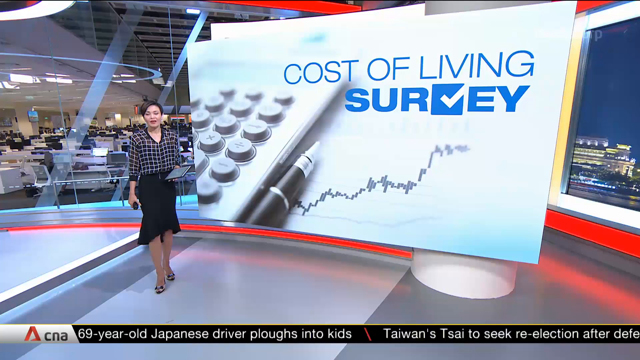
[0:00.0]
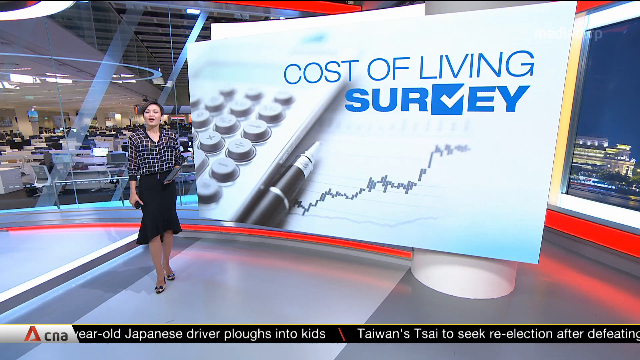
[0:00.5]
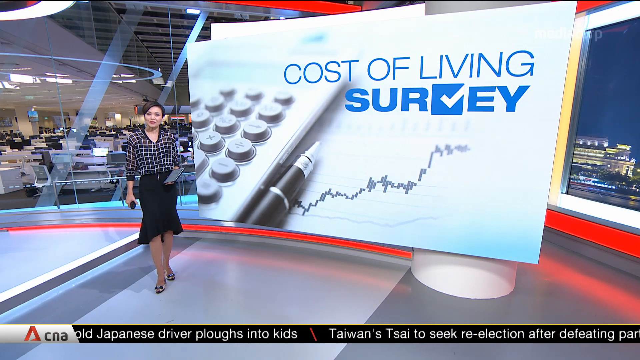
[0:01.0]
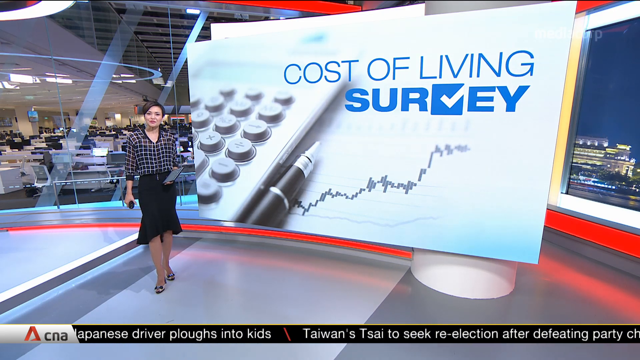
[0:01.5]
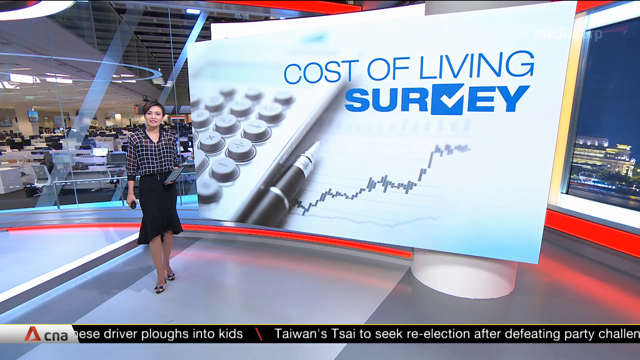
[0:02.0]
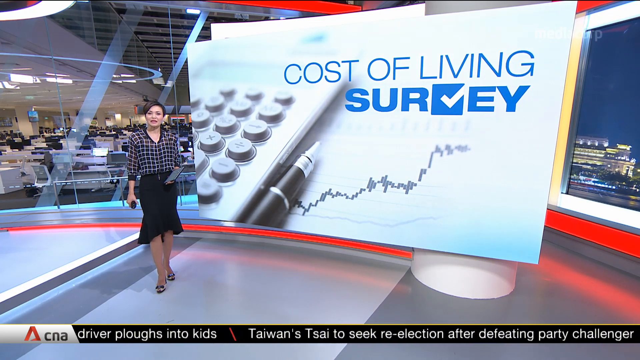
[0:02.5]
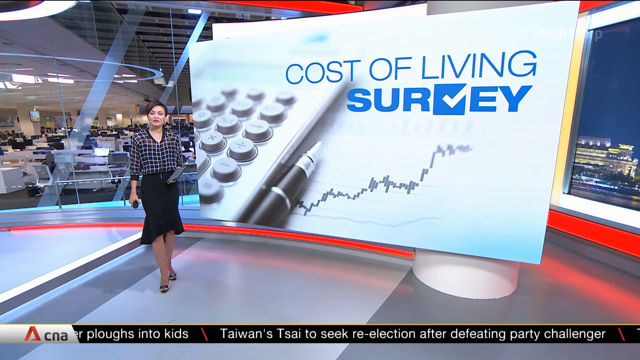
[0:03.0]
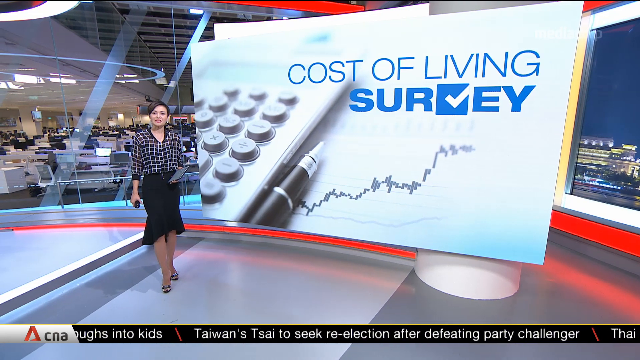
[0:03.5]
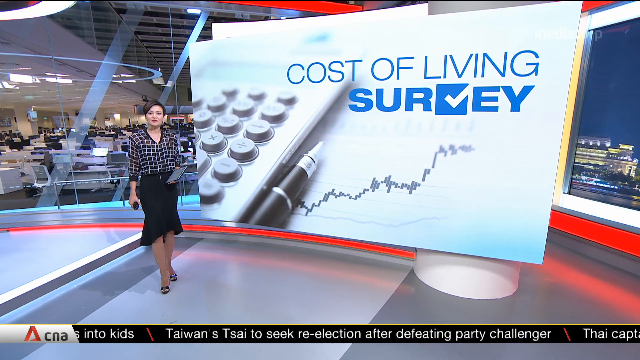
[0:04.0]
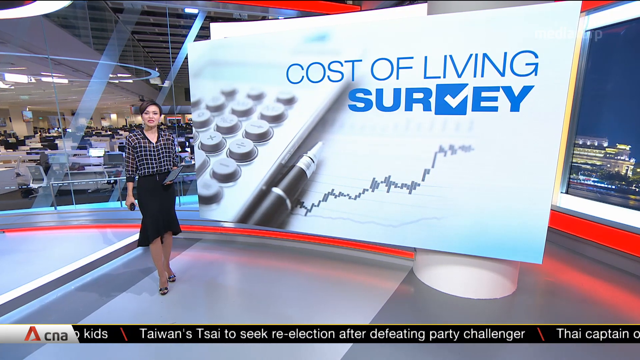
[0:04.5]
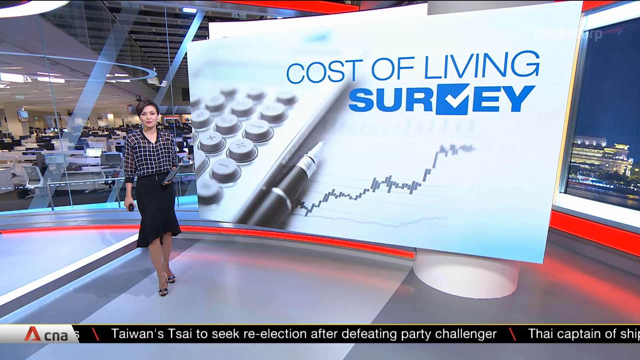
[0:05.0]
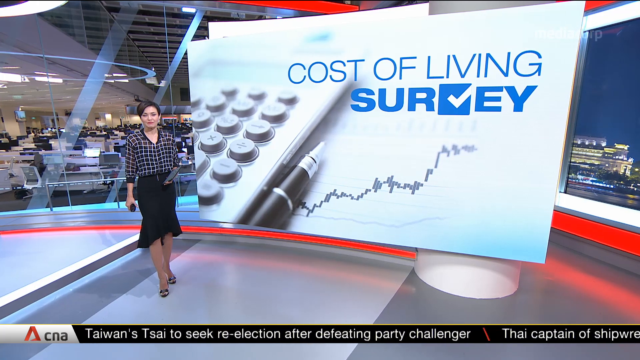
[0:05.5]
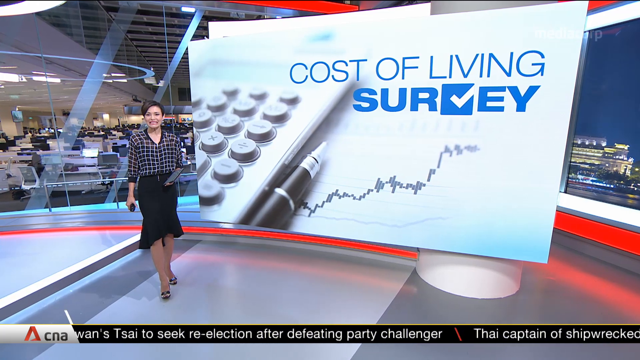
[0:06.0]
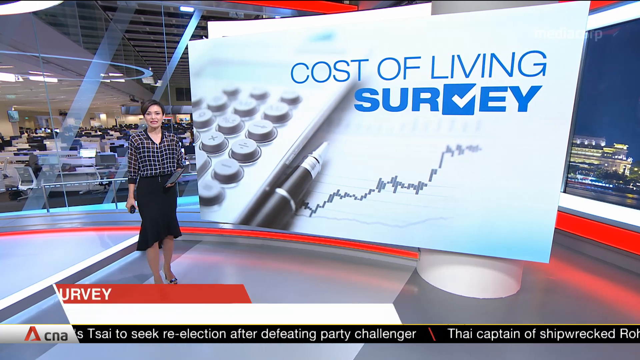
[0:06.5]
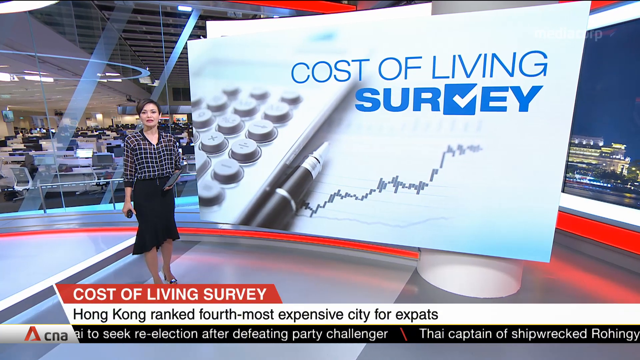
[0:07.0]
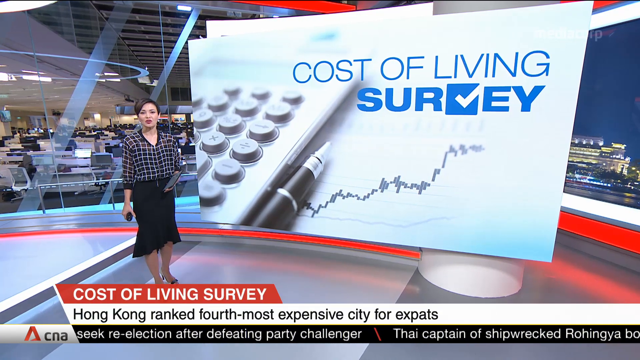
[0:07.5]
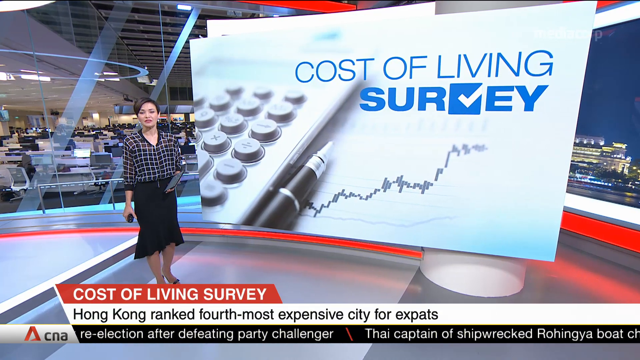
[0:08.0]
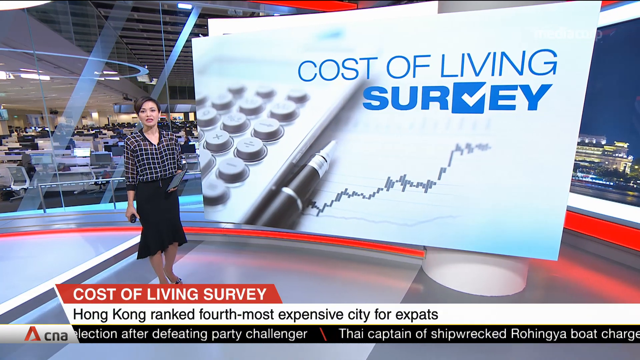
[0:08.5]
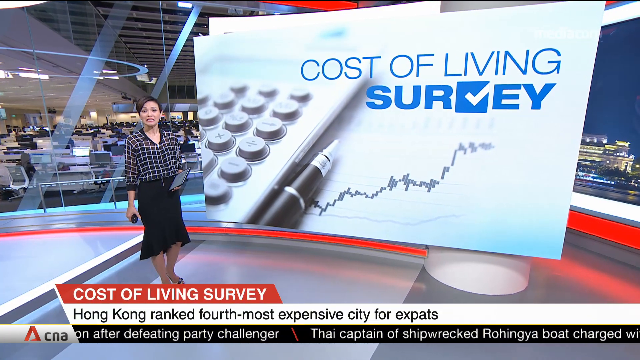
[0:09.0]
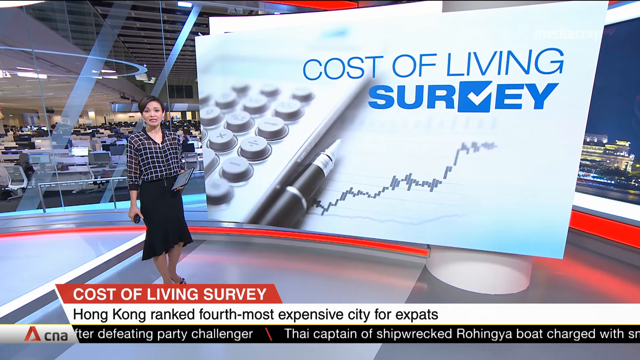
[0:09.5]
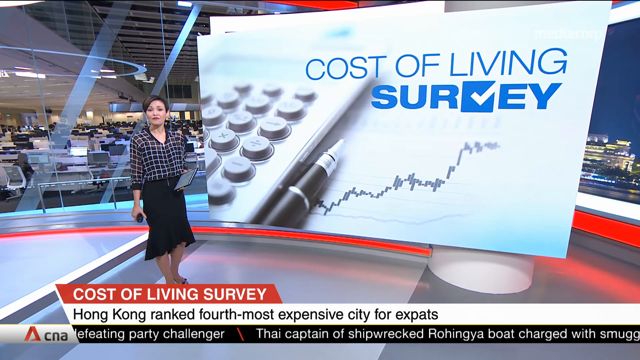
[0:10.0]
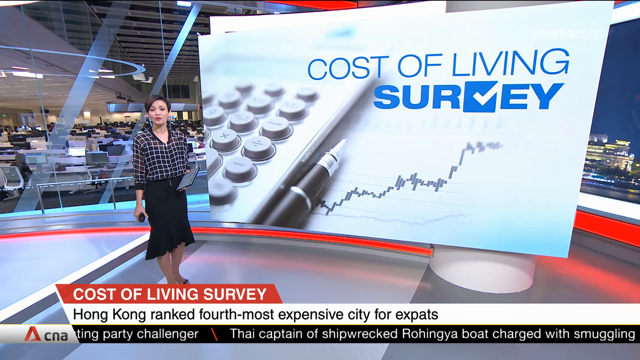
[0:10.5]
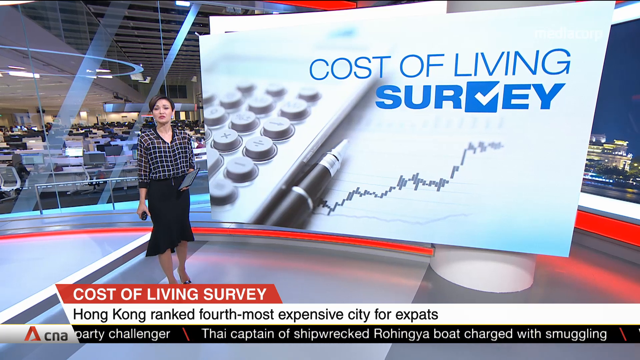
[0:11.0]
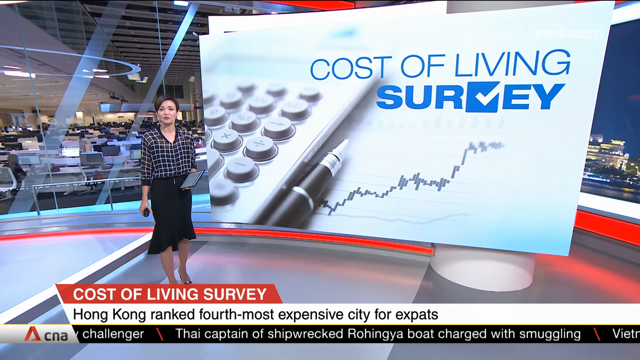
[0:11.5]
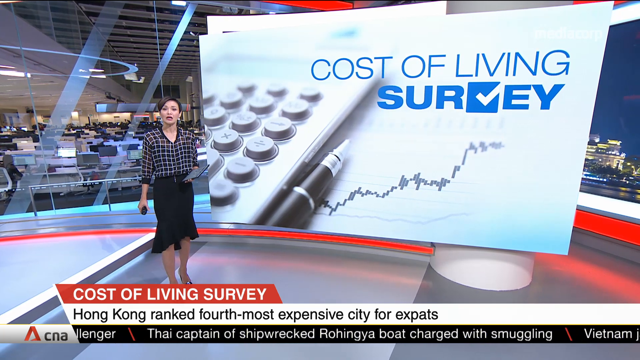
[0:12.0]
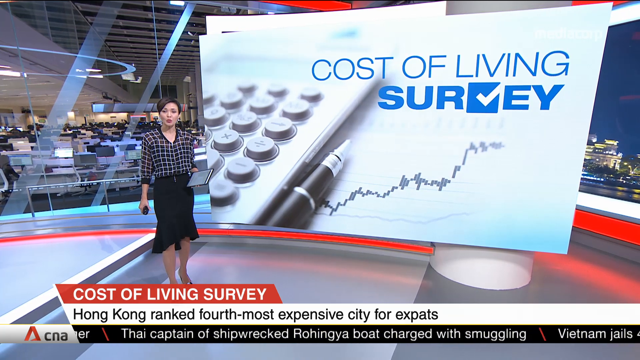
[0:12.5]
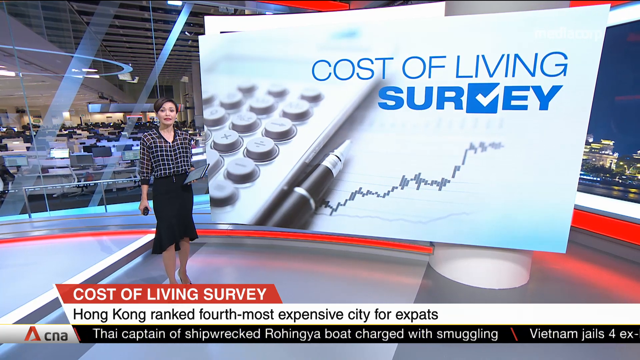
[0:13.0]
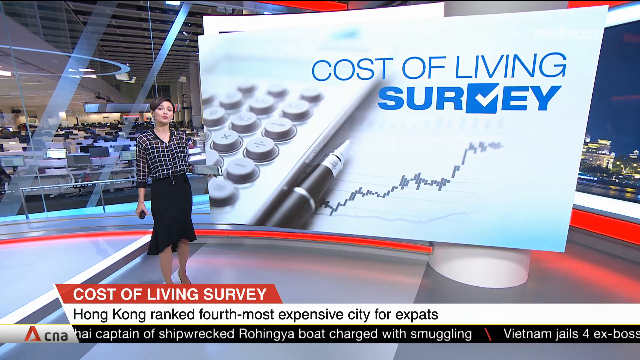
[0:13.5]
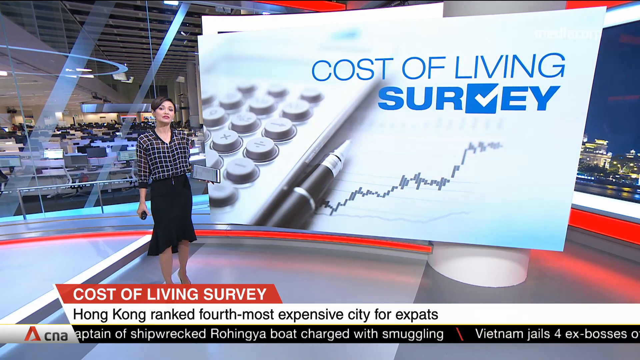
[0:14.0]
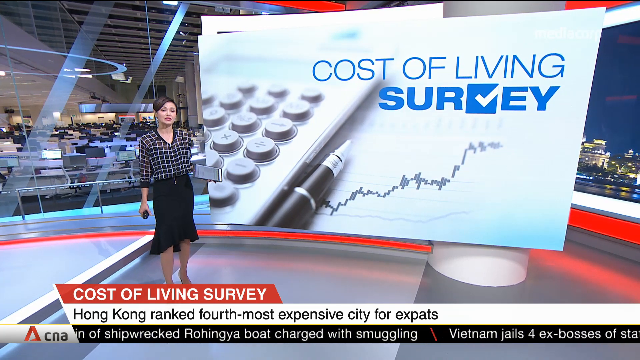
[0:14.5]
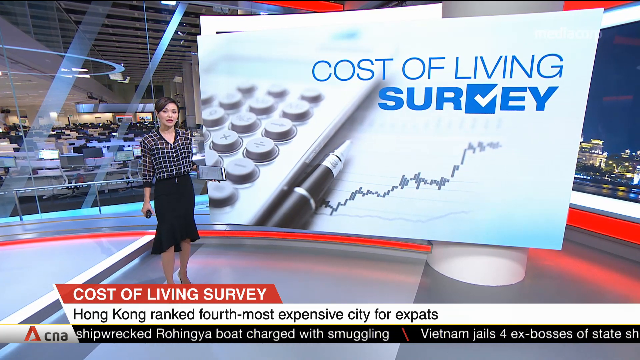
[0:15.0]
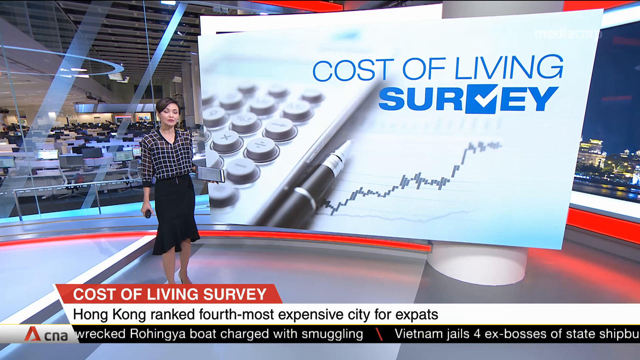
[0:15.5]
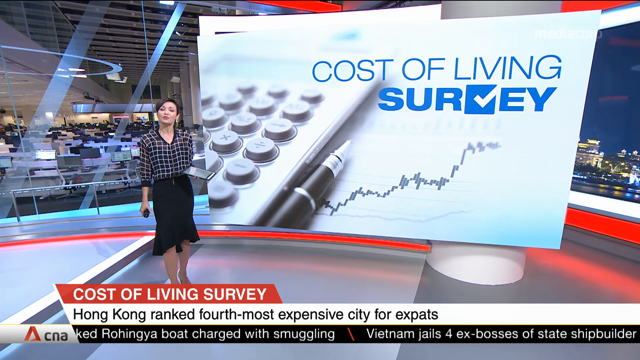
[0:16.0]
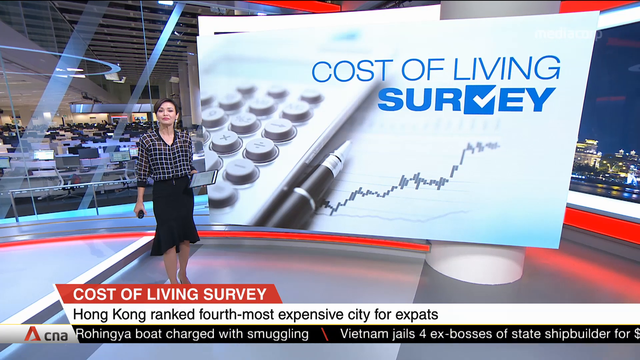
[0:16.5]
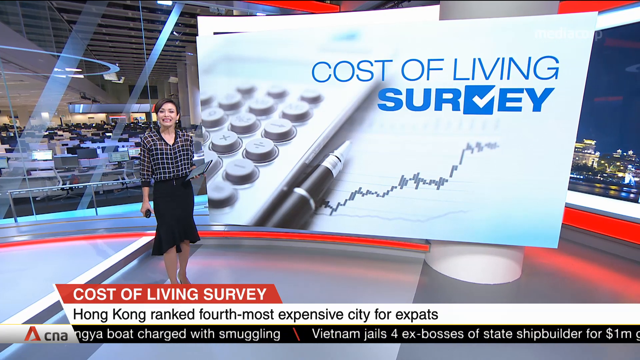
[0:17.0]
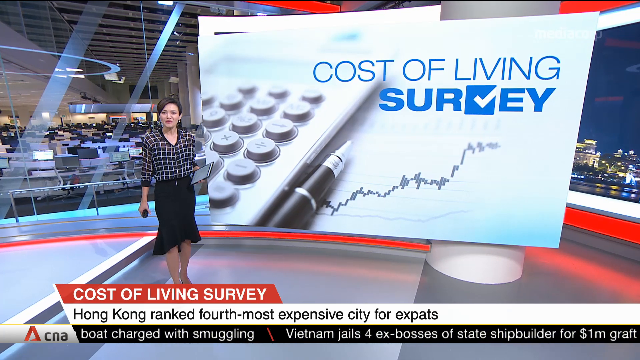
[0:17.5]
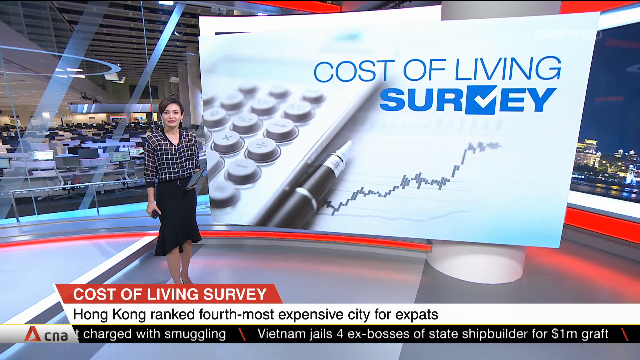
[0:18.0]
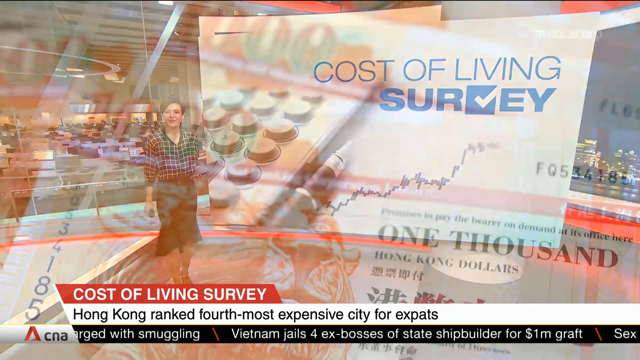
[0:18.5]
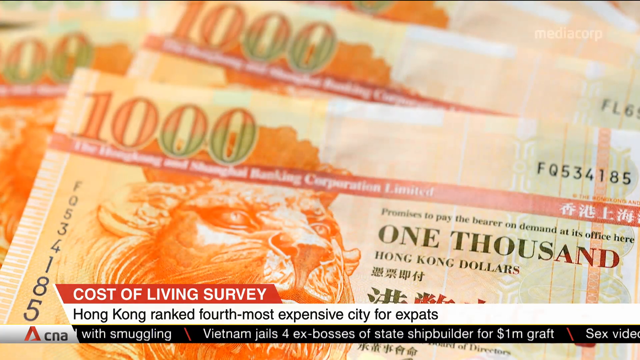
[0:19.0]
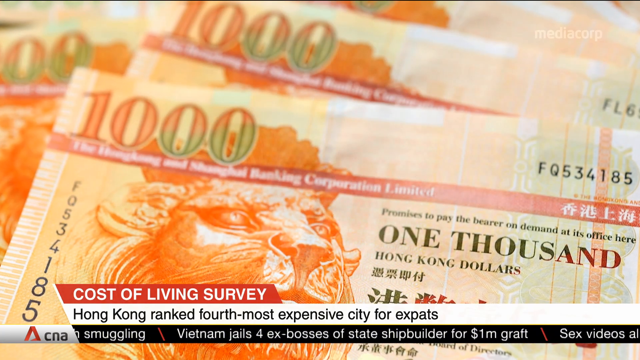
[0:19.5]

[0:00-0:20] A reporter with short black hair, wearing a black skirt, a black top with white stripes and high heels, holds an iPad while reporting on a cost of living survey. The headline reads "cost of living survey, Hong Kong ranked the fourth most expensive city". The background is white and shows the survey, with what looks like a graph that goes up and down inconsistently. Later, a brown 1,000 Hong Kong dollar note is shown in the background.